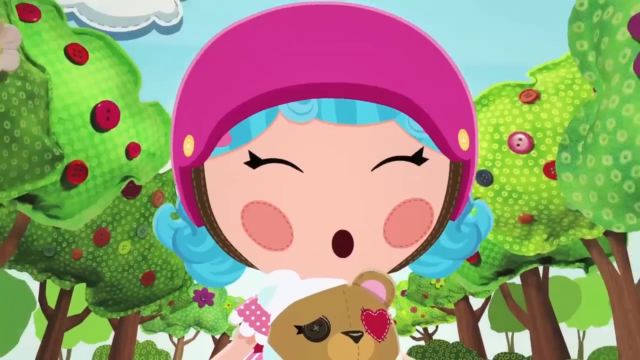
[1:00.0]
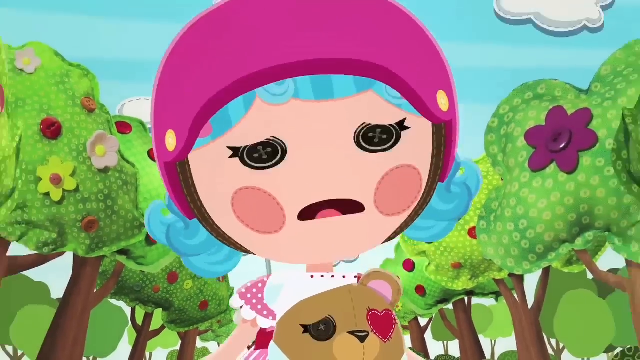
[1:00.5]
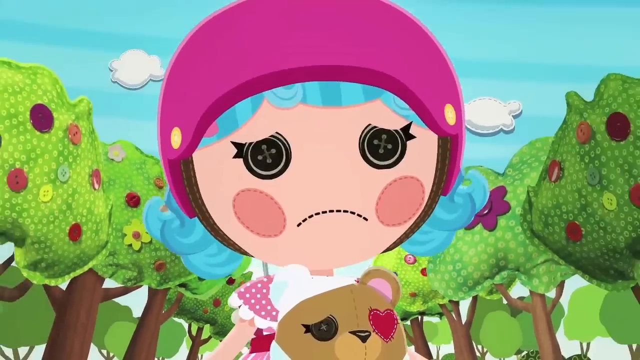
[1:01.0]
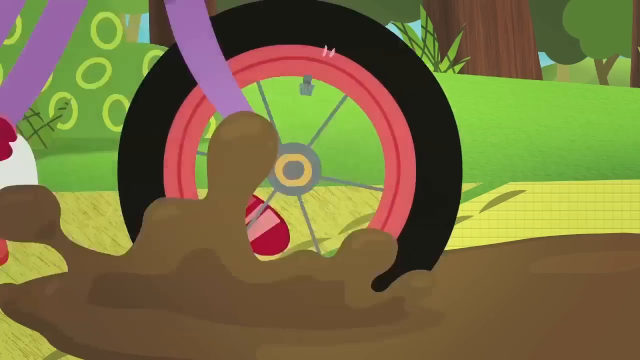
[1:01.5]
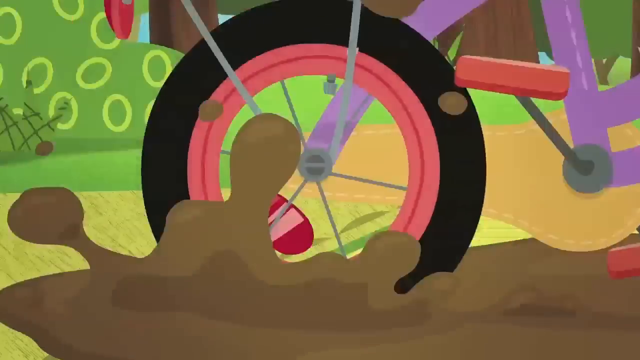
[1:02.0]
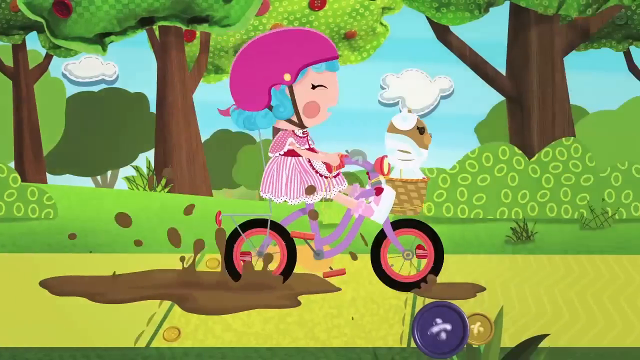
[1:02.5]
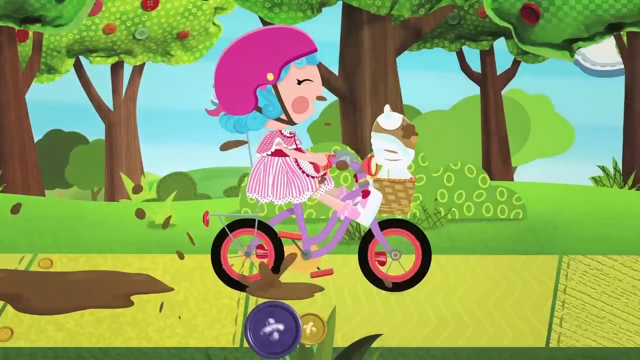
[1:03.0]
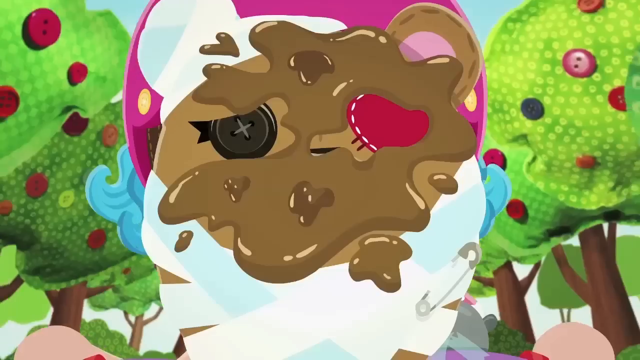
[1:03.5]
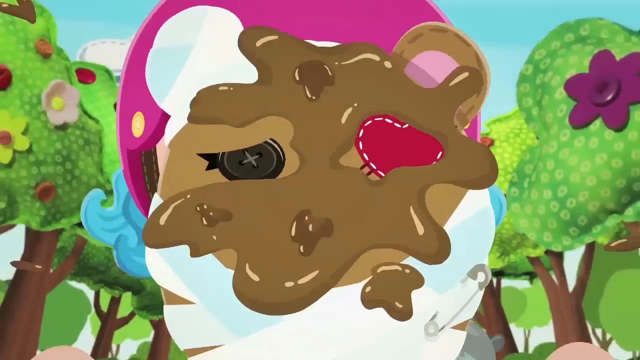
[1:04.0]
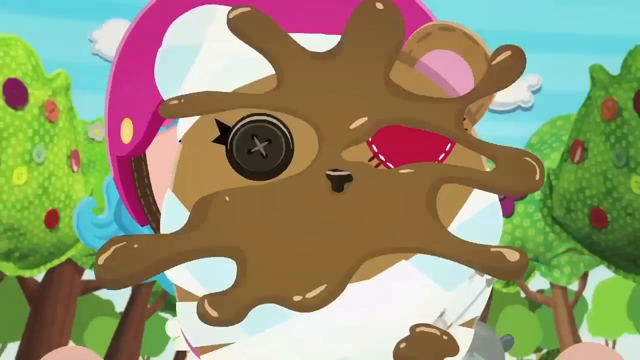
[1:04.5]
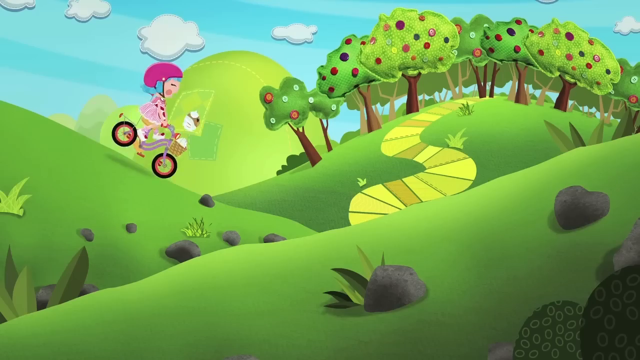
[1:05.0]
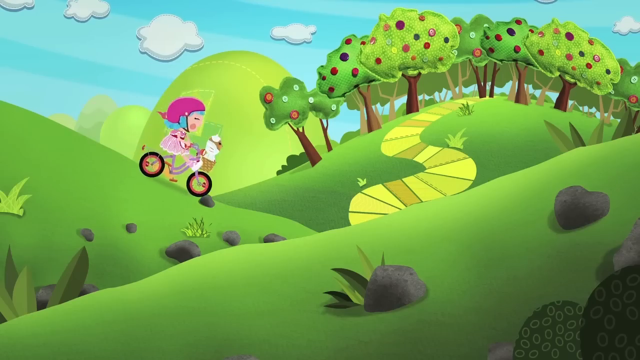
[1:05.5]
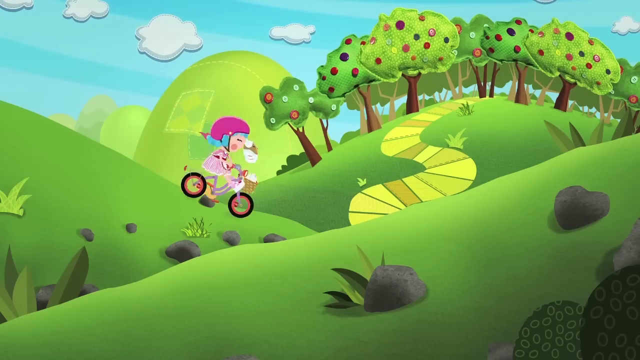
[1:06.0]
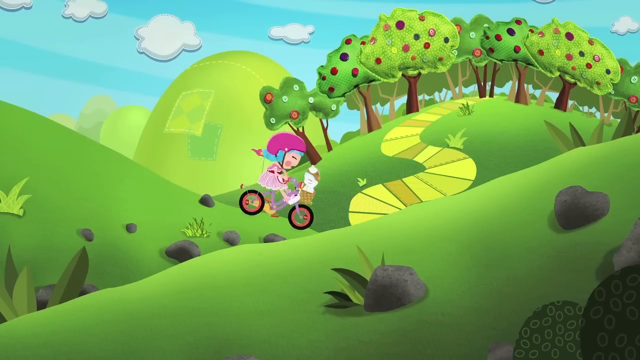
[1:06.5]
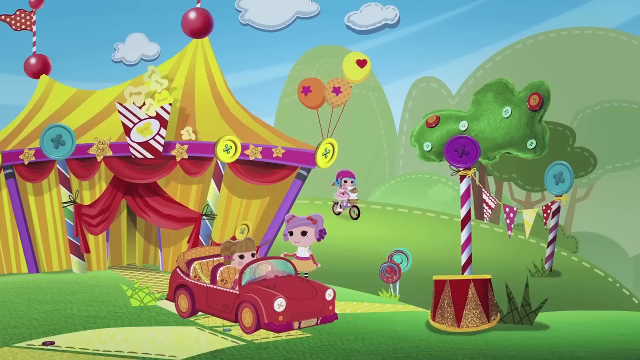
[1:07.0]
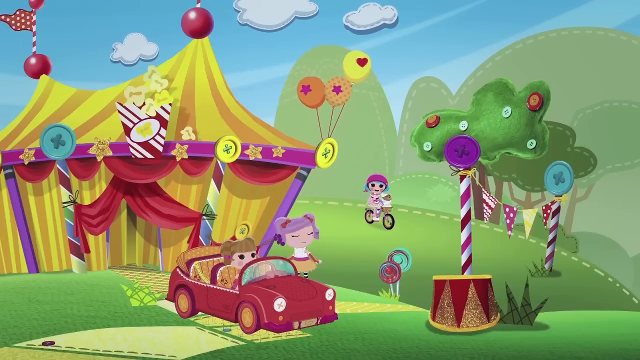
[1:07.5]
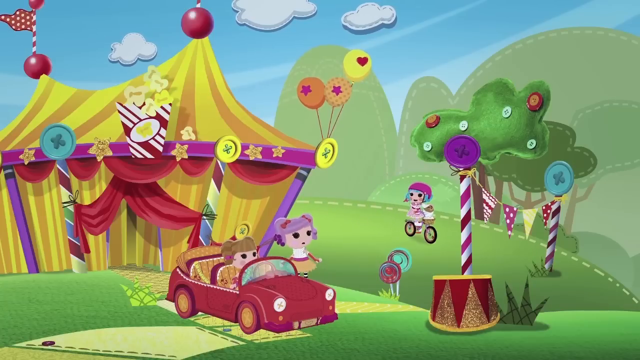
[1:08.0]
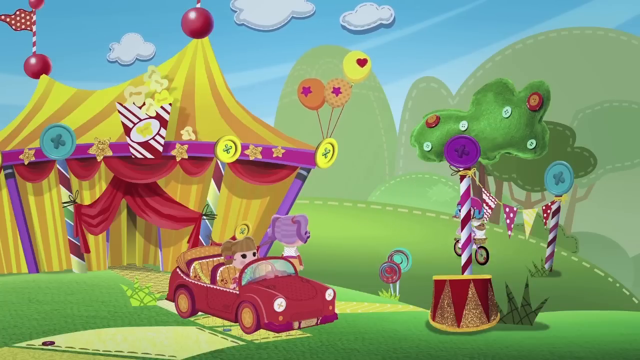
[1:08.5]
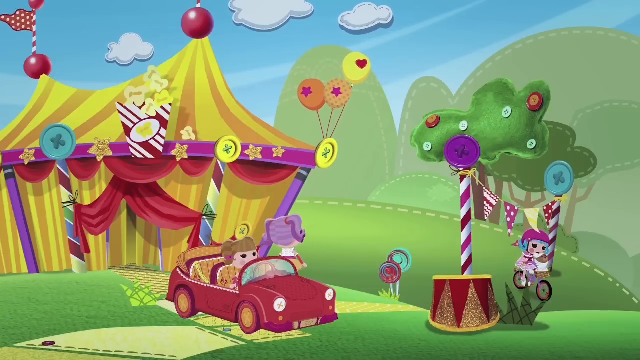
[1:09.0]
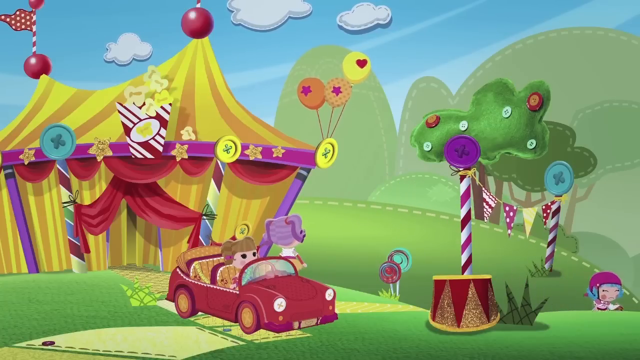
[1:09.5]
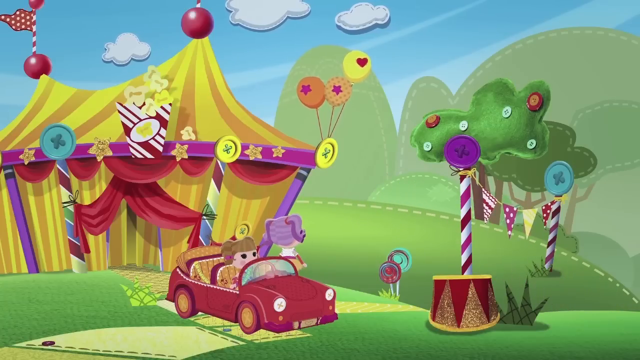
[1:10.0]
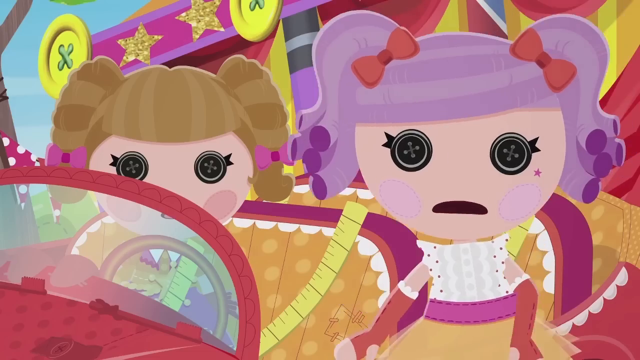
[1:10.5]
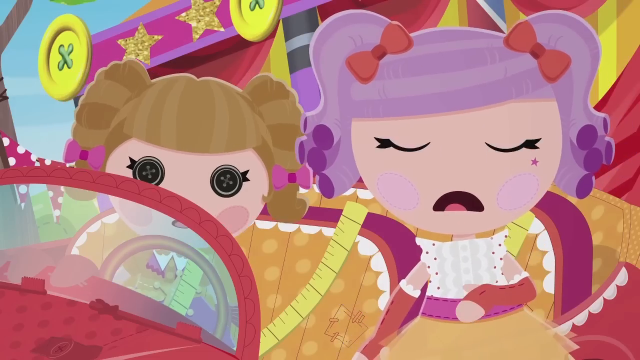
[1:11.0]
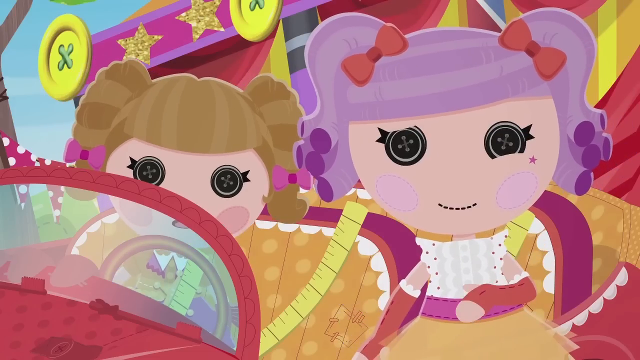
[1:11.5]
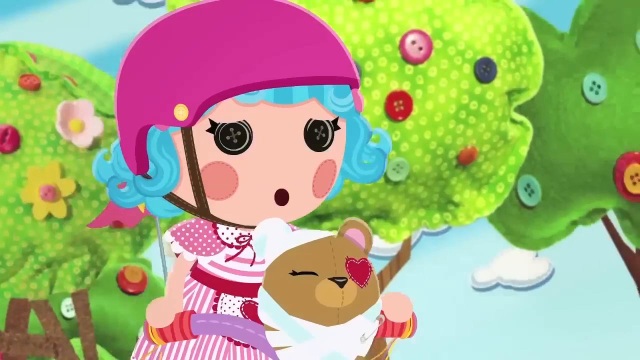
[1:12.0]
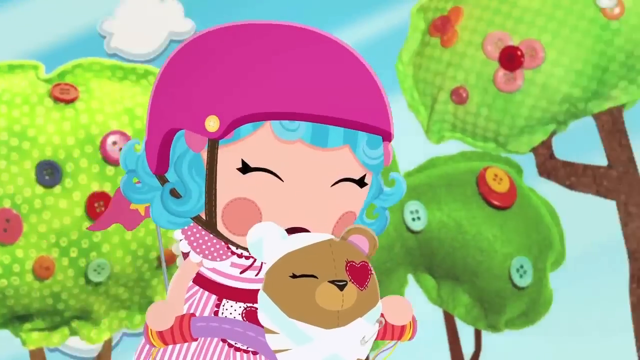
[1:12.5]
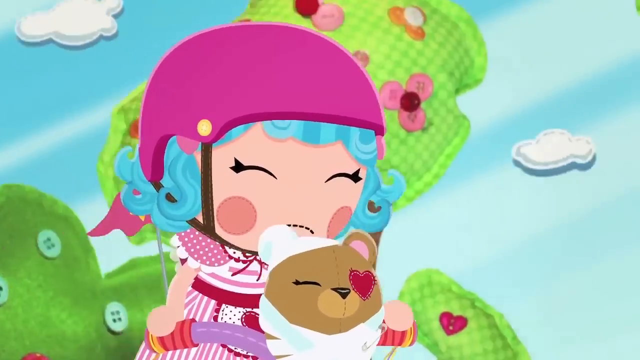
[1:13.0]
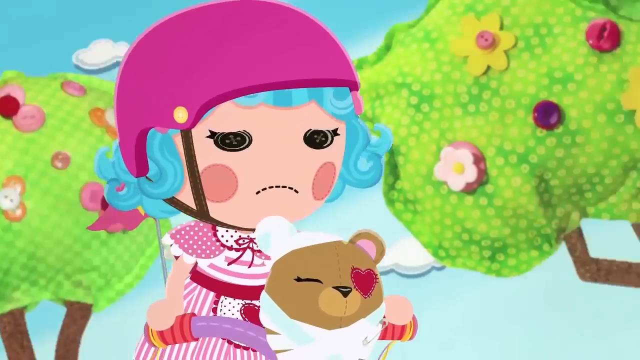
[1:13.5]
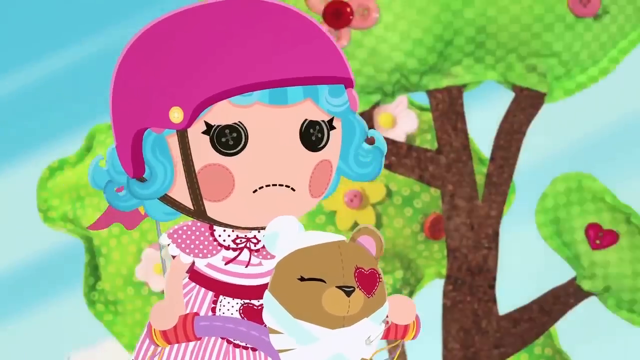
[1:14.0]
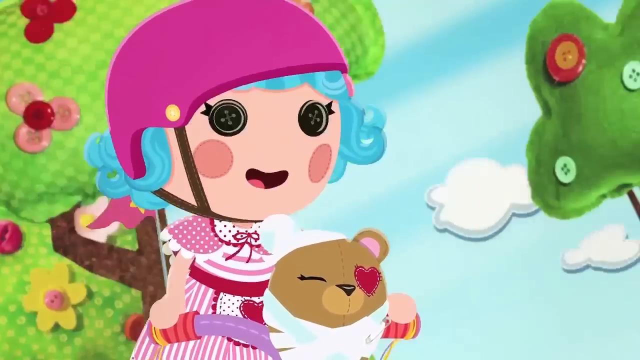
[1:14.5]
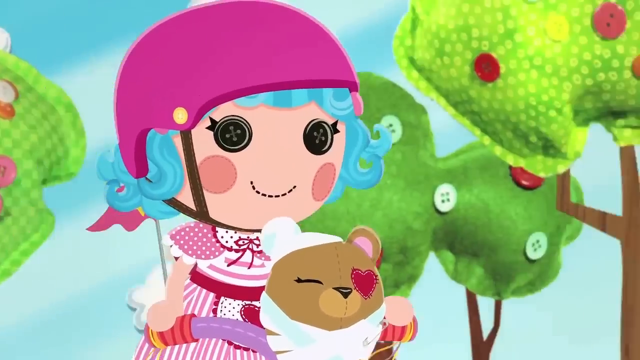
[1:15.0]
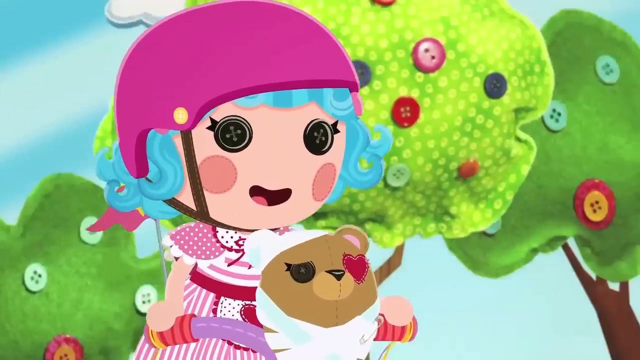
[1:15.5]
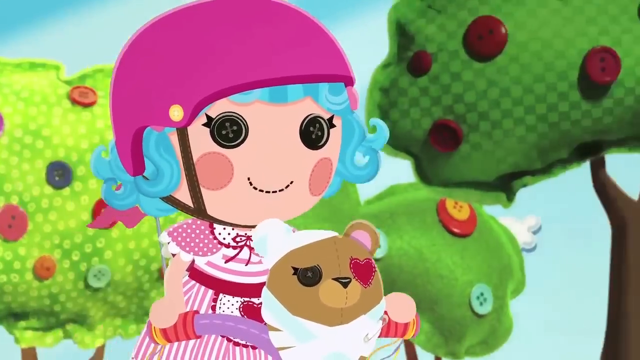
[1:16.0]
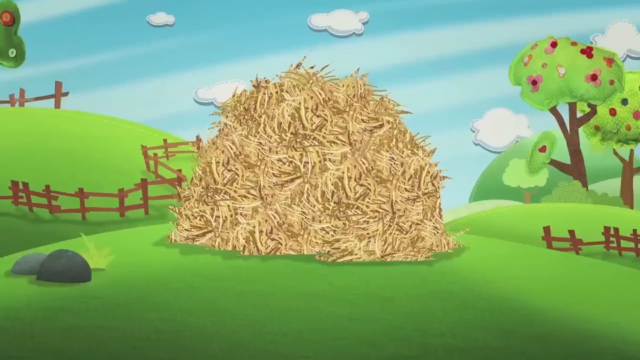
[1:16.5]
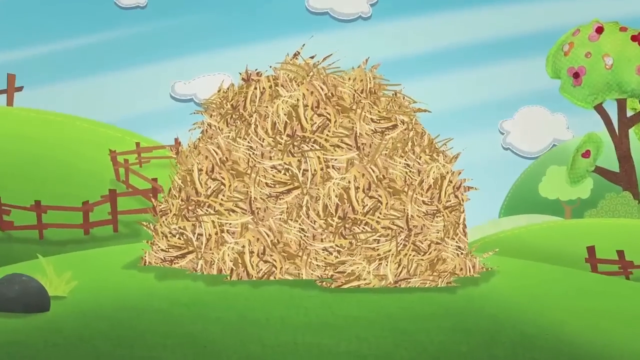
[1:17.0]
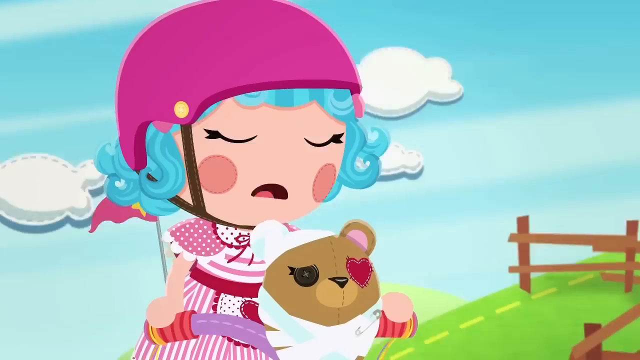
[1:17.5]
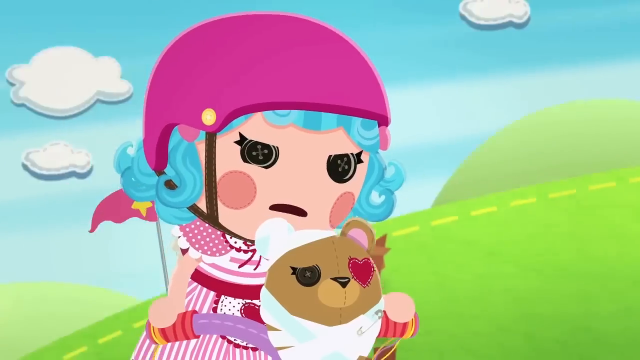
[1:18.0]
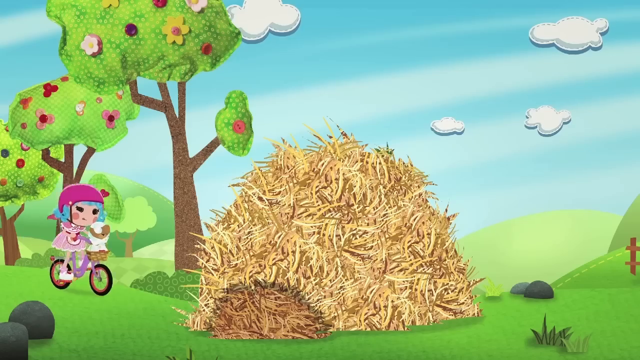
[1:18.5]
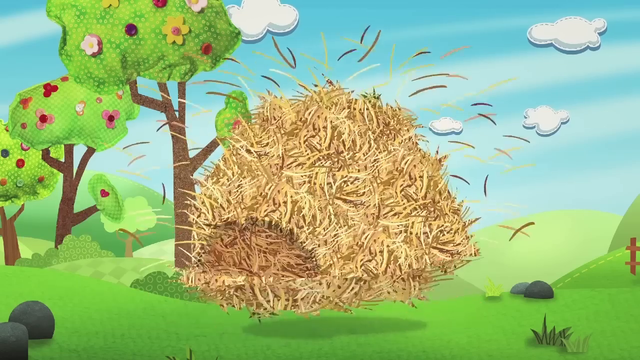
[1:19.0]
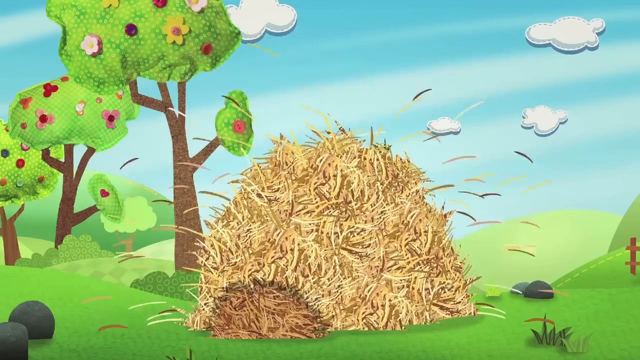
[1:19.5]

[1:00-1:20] The animated show of dolls with buttons for eyes continues with the girl on her bike, a teddy bear in a basket at the front. She is very stressed and sad. As she rides on, she goes through a puddle of mud, which splashes onto the bike and her teddy bear, and she continues down a mountain in distress. On the way down she passes a carnival and two other dolls with their car, who exclaim at her. As she continues on, she becomes a little happier and has a smile on her face. She exclaims and rides right into a hay barrel, crashing into it with her teddy bear on the front of the bike.